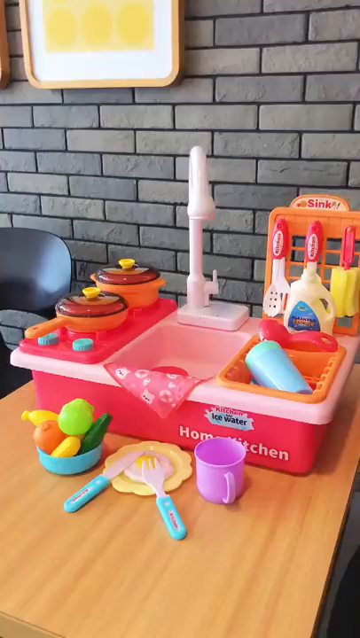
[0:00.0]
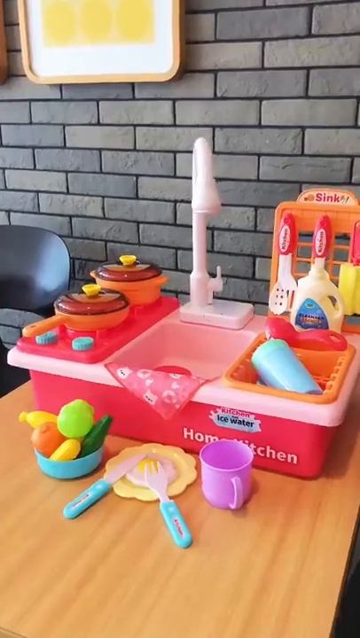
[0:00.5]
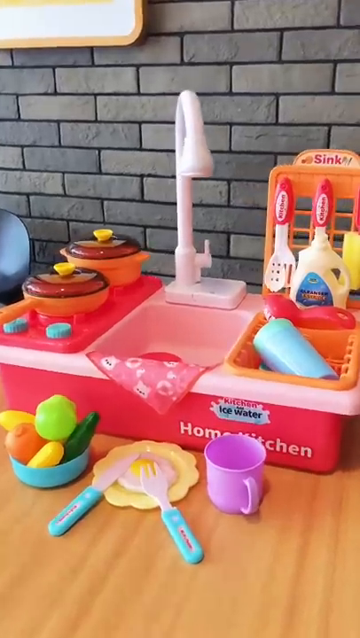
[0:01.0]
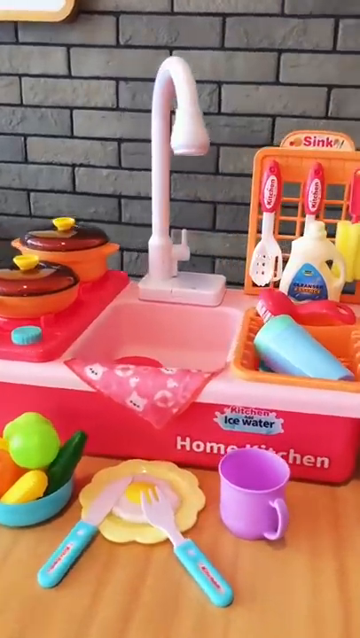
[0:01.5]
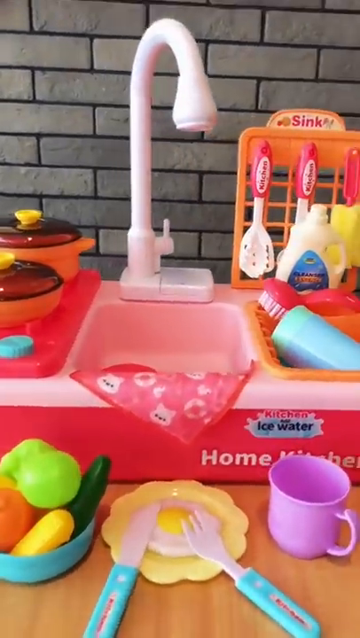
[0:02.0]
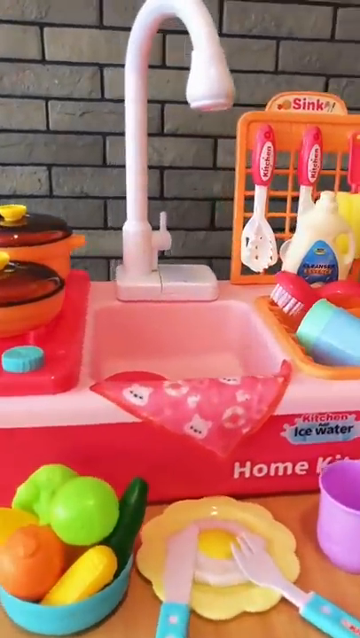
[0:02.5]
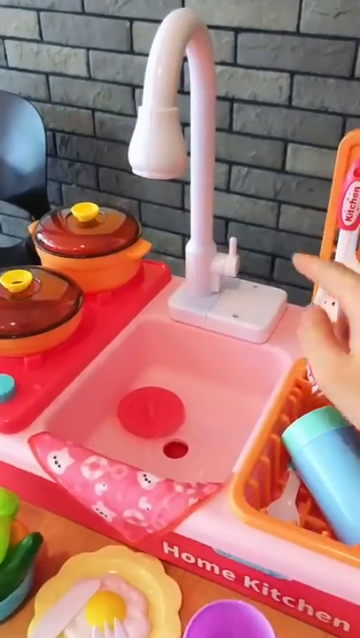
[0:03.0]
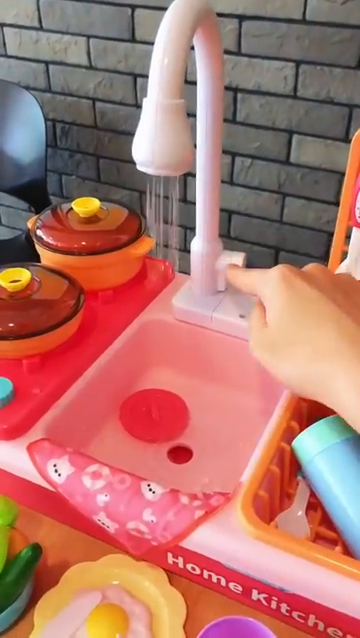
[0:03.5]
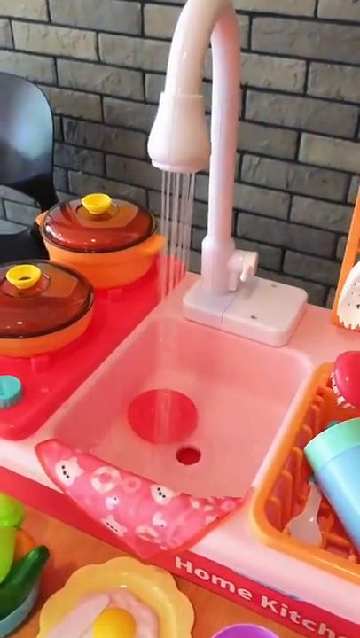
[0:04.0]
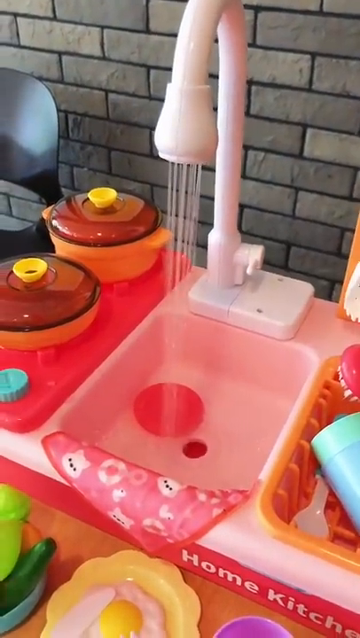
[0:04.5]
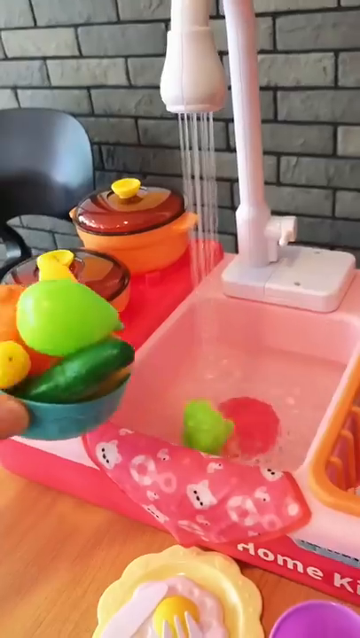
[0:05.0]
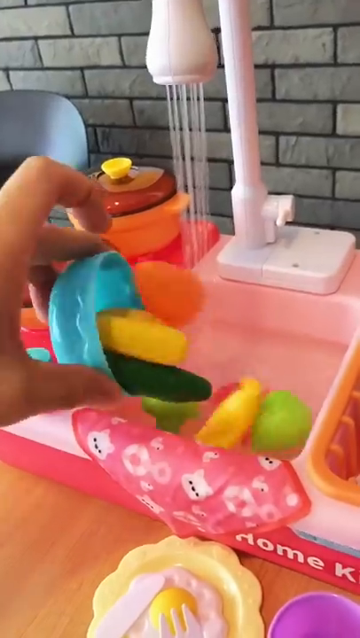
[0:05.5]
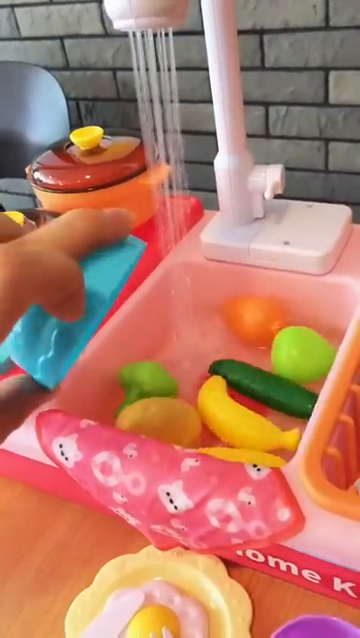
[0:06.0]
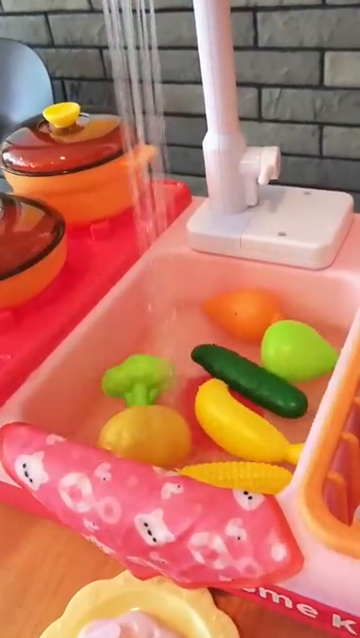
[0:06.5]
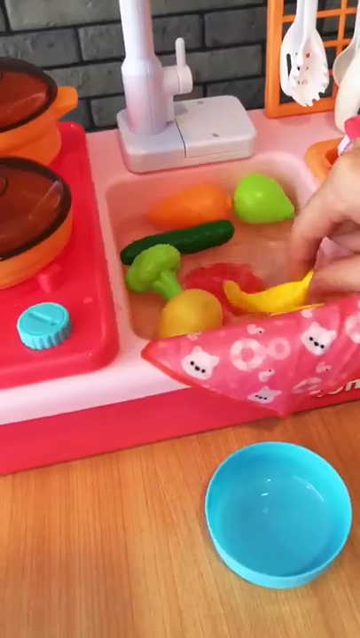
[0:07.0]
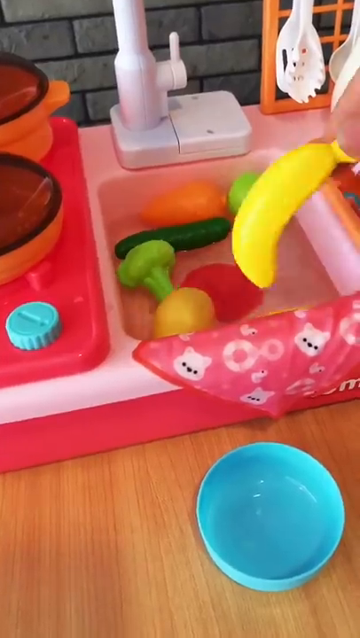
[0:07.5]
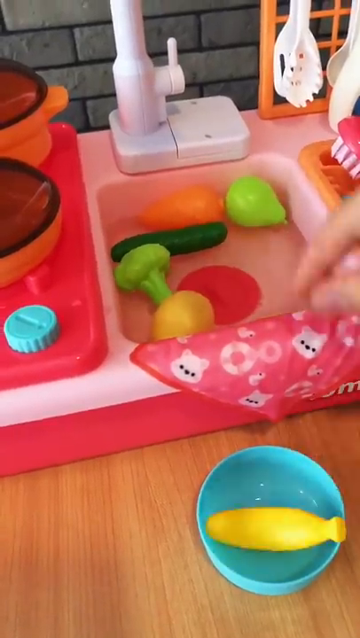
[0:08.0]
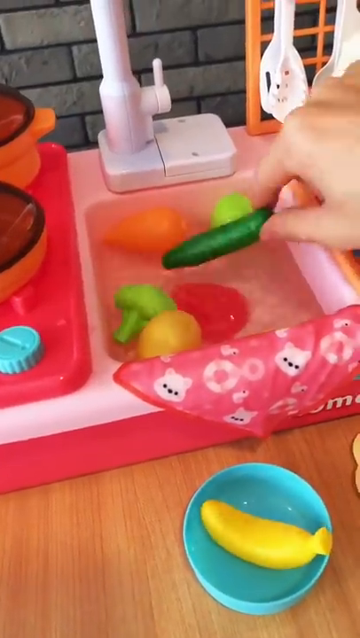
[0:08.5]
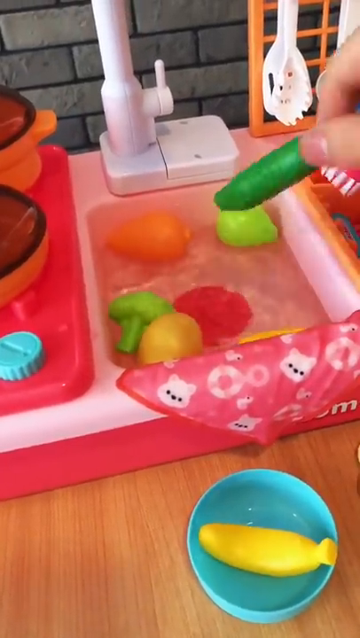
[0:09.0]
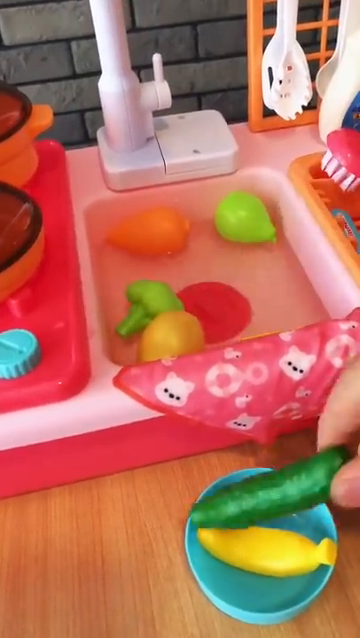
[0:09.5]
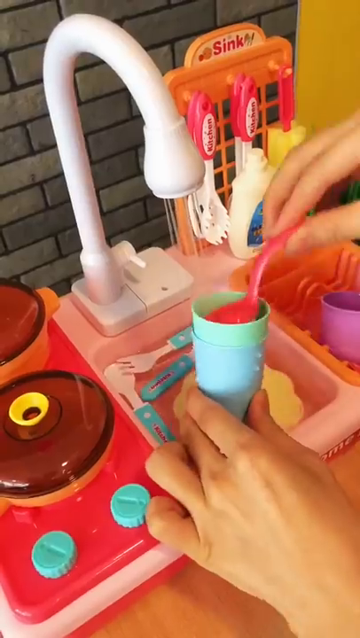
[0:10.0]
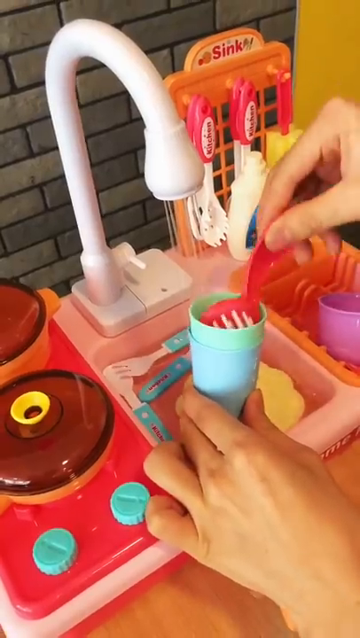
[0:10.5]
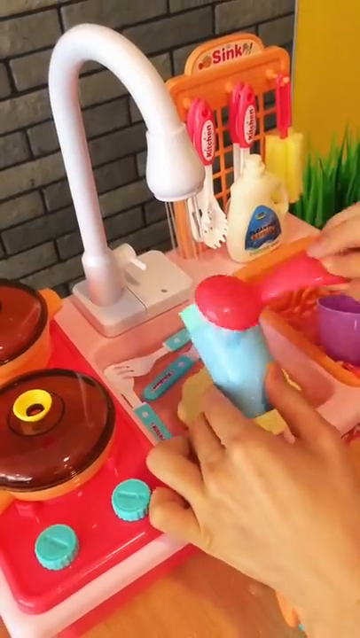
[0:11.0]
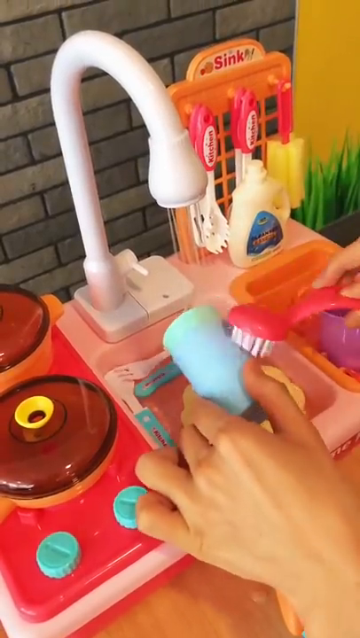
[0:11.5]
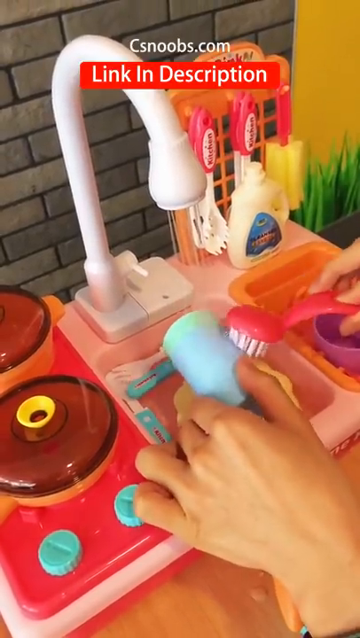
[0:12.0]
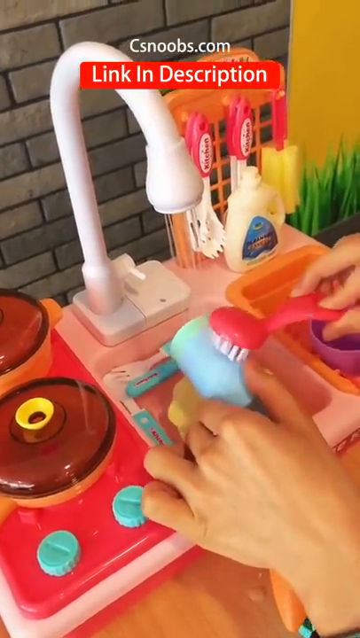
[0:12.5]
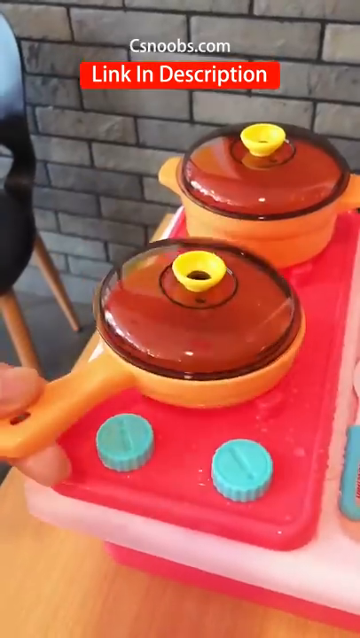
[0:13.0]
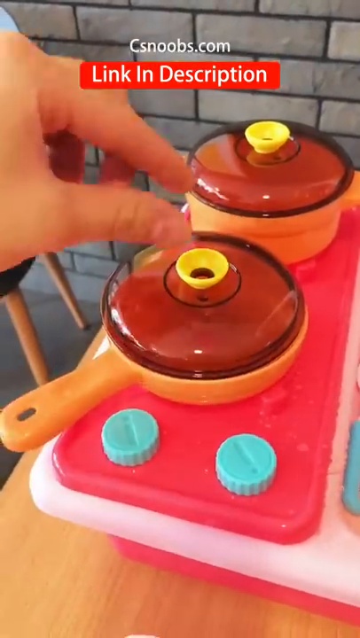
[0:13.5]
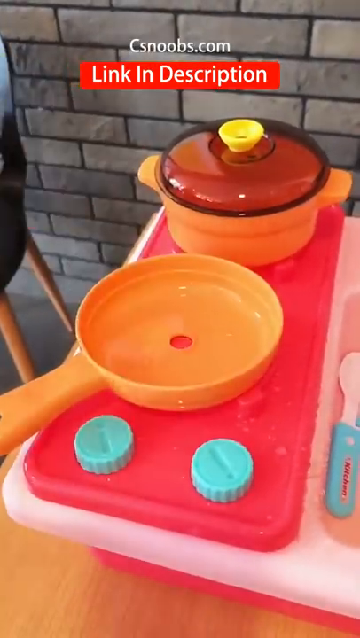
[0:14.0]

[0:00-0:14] What appears to be a children's play set is shown. On the right is a purple teacup, and to the left of it is a yellow plate shaped like a flower, with a knife and a fork on its left and right. To the left of that is a bowl holding various foods, mostly green and yellow, and behind that is a sink. On the left-hand side are two orange crock pots with clear lids on top. At the back end is a white faucet, and on the right-hand side are a dish drainer and a dish rack. All the way in the back is a gray brick wall. On the bottom right of the kitchen sink, "kitchen" is written in pink text, "ice water" in black text, and "home kitchen" below that in white text. Everything is on what appears to be a light brown table. The camera shows different angles of the setup. A person pulls down on the faucet trigger and water comes out of the faucet. The person dumps seven different food items into the sink, including a banana, a cucumber and various others. The person then washes one of the light blue cups with a scrub brush, while "link in description" appears up above in white text on a red background. Finally, the person opens one of the crock pots.